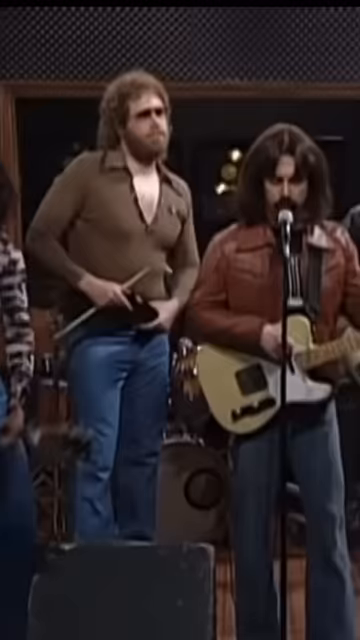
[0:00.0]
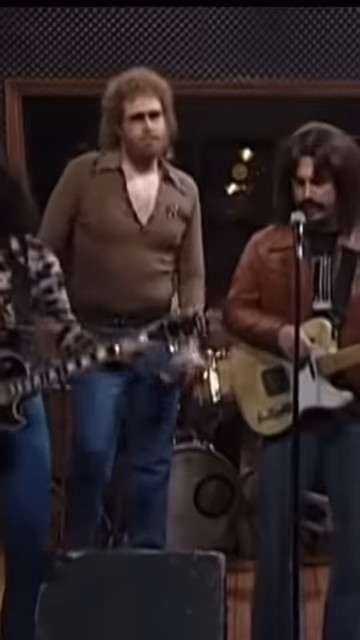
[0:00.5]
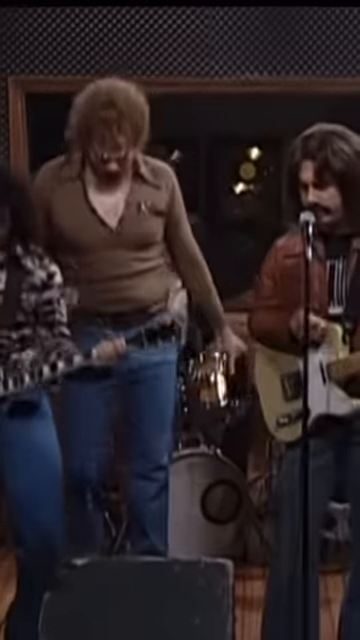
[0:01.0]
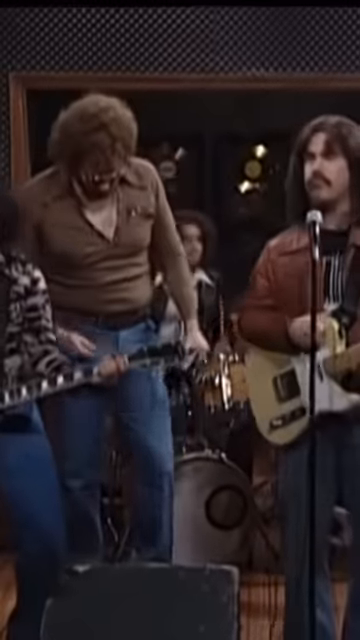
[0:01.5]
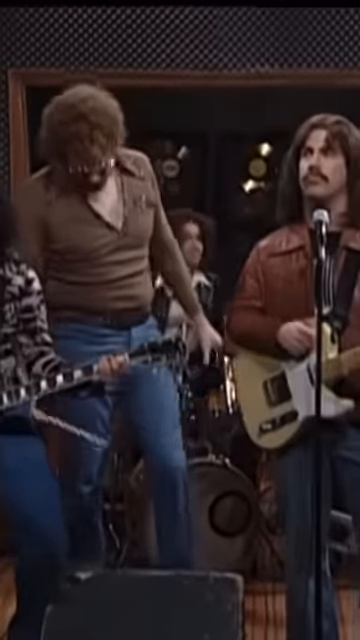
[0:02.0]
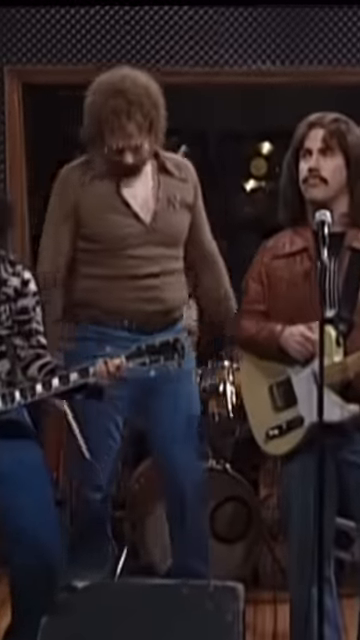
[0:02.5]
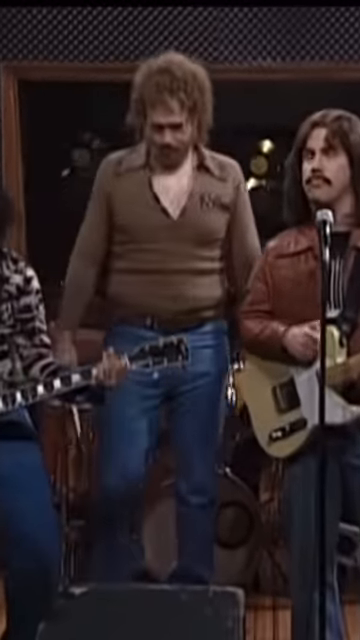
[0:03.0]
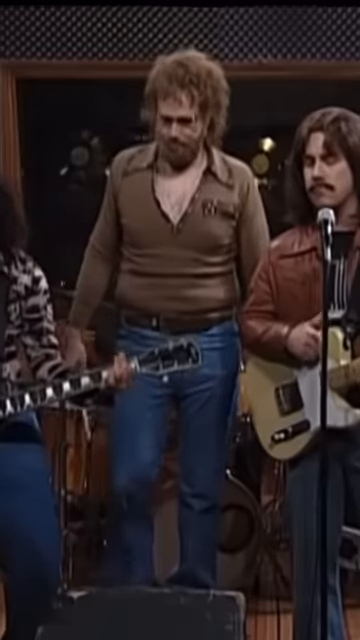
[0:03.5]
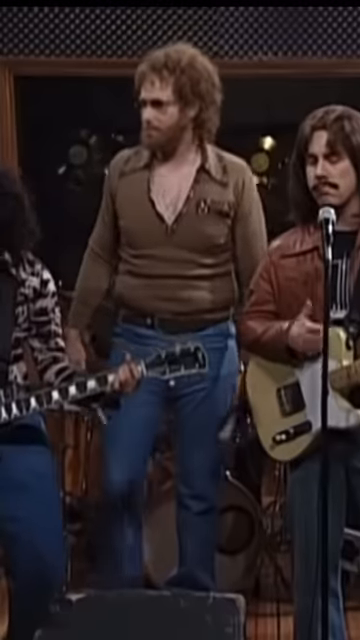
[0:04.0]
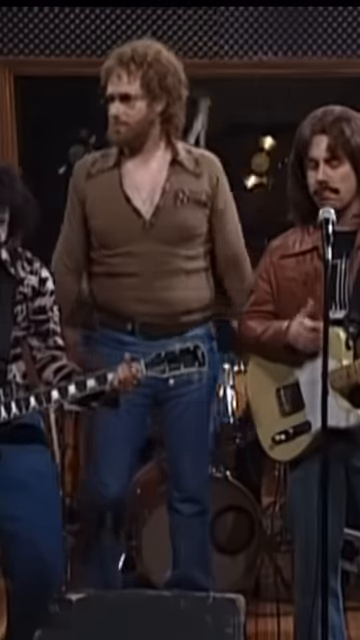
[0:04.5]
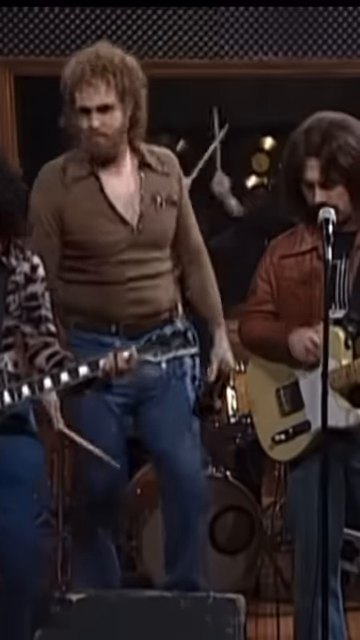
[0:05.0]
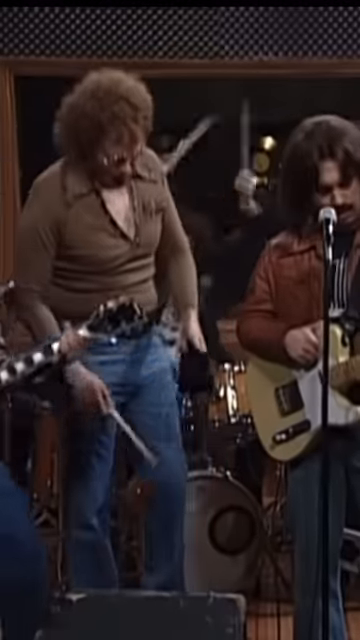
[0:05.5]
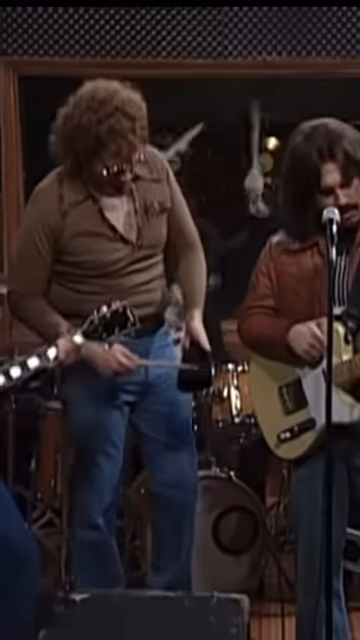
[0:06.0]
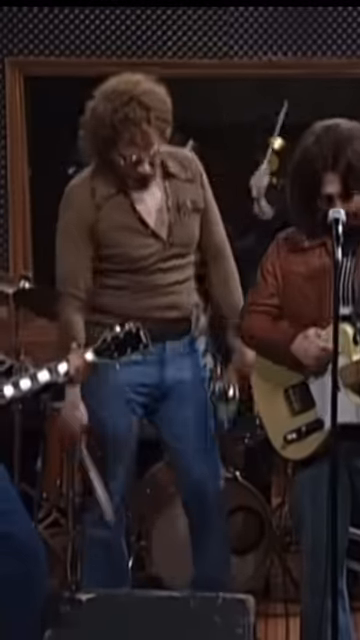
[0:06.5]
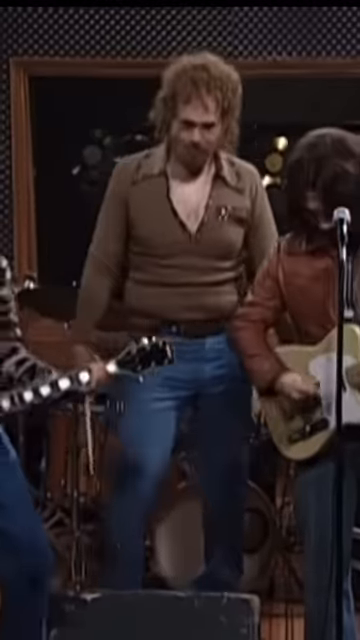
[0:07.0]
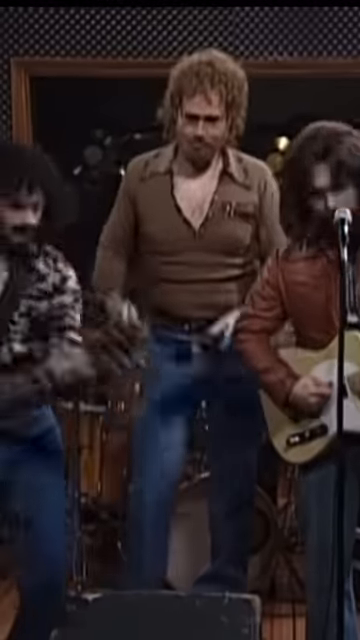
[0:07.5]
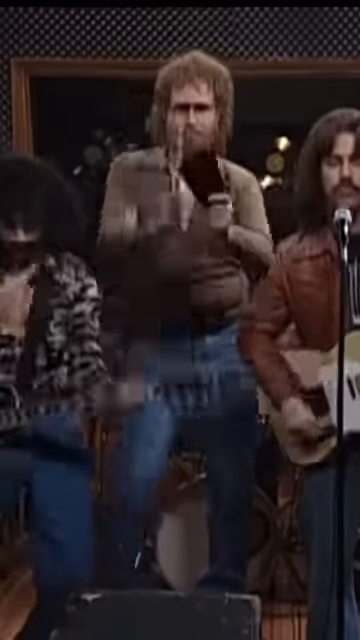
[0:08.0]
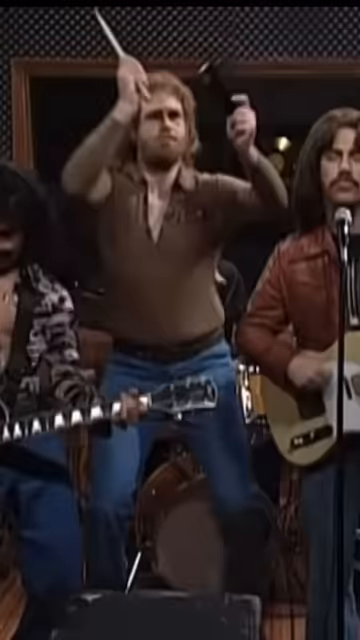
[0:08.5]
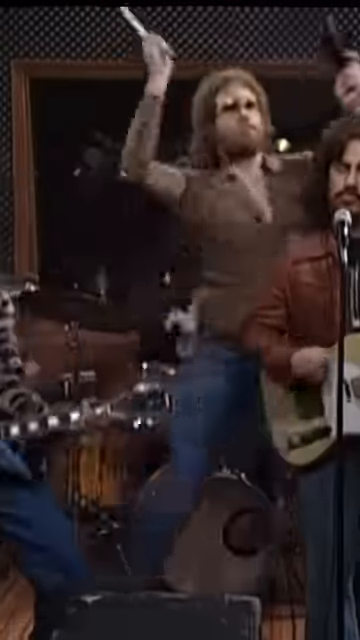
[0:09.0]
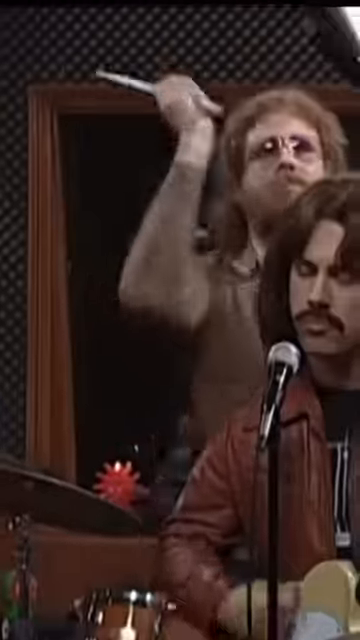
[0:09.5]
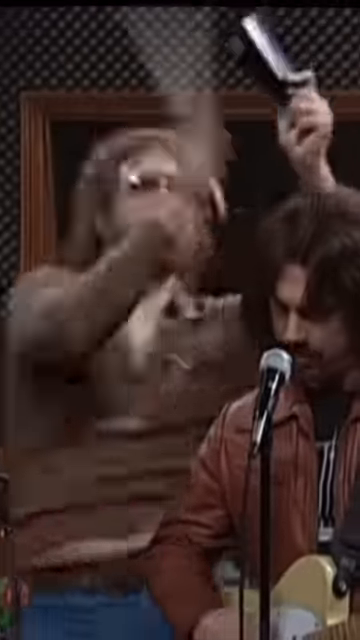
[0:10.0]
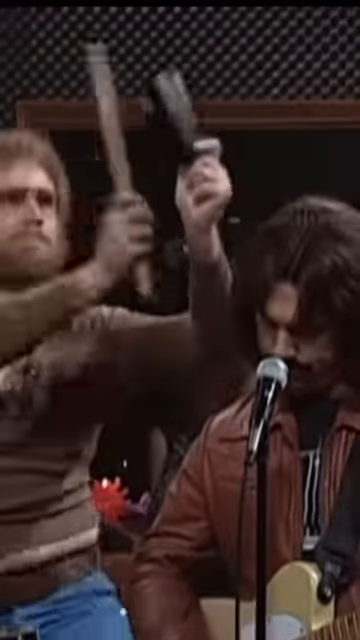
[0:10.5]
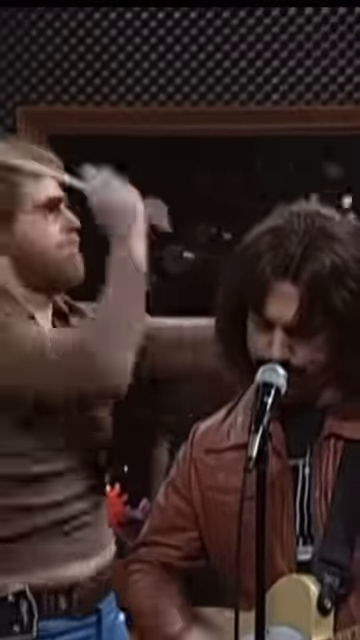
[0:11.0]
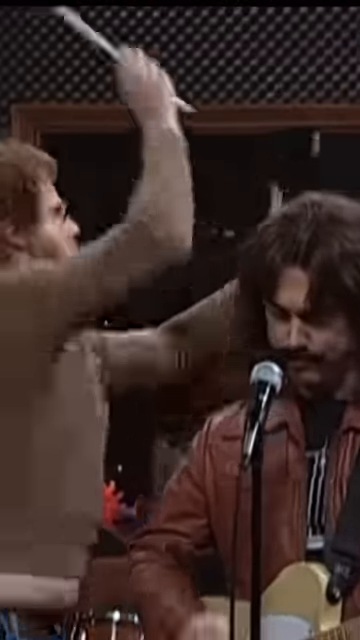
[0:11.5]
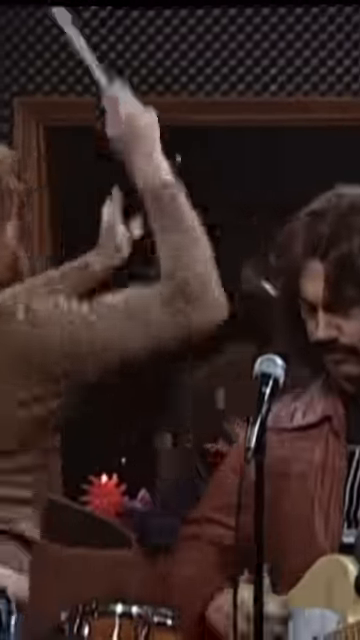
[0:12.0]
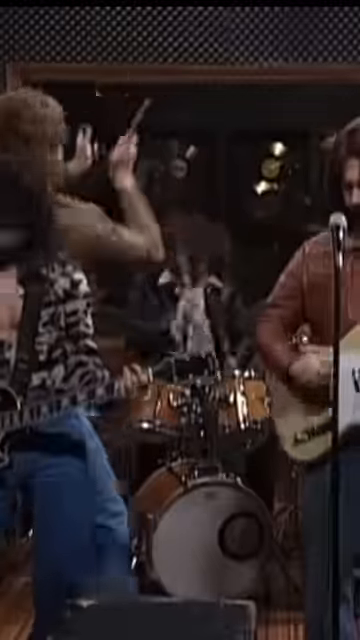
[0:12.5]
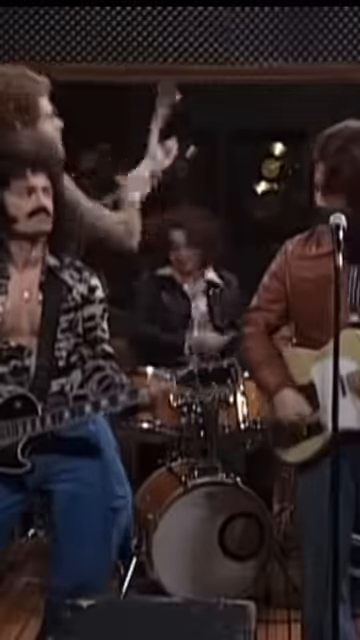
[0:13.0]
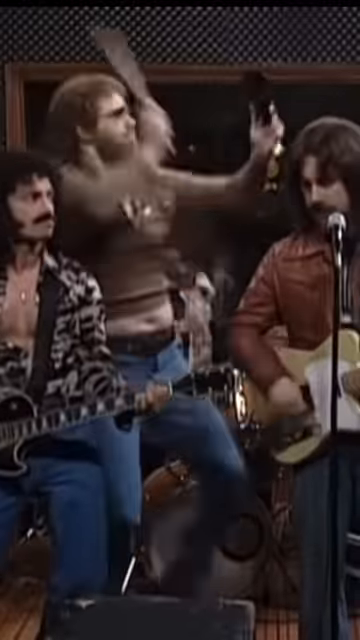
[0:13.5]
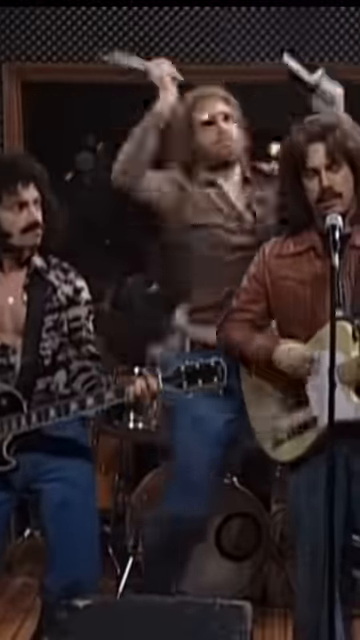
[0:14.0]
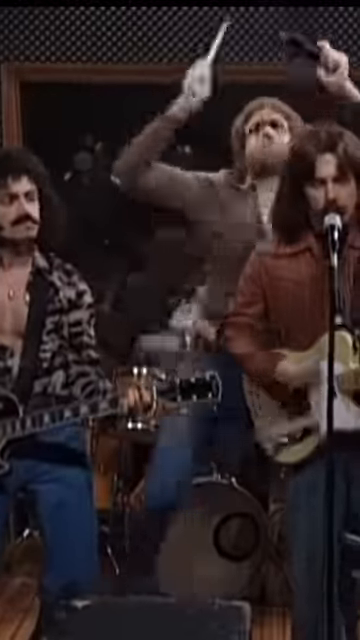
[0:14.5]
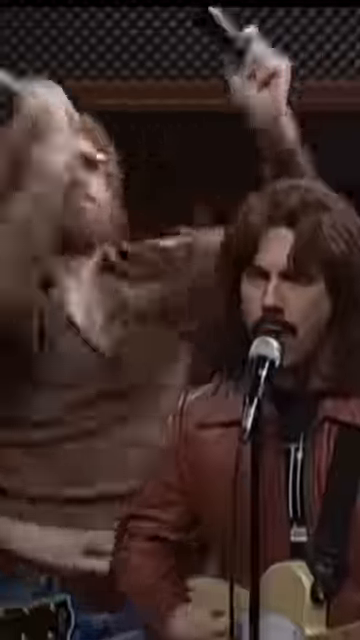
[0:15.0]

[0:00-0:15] Several men perform in a band on a stage, apparently four of them. They seem to be from the late 80s or early 90s, judging by how they are dressed: mullet hairstyles, v-necks, jeans, and mustaches. The main focus is on the man playing the cowbell; he plays it fiercely and the camera focuses on him. Four instruments are being played: a guitar, the cowbell, drums, and a bass. This might be a skit.